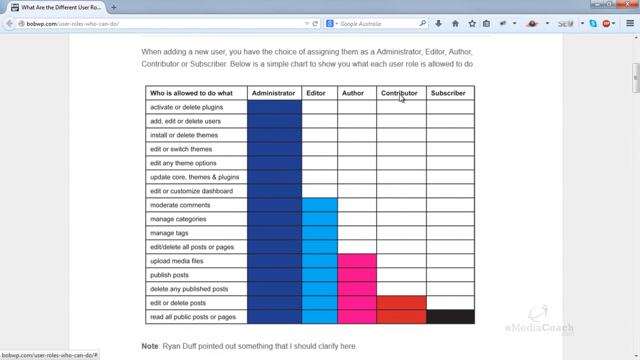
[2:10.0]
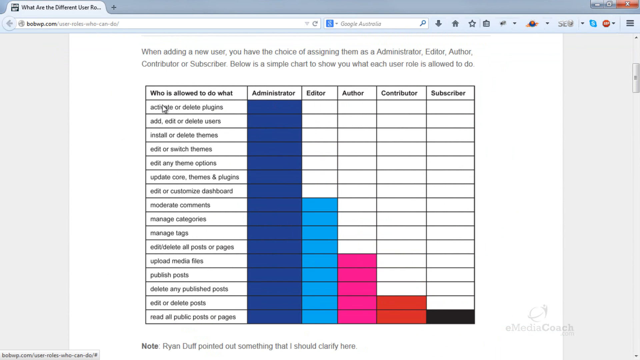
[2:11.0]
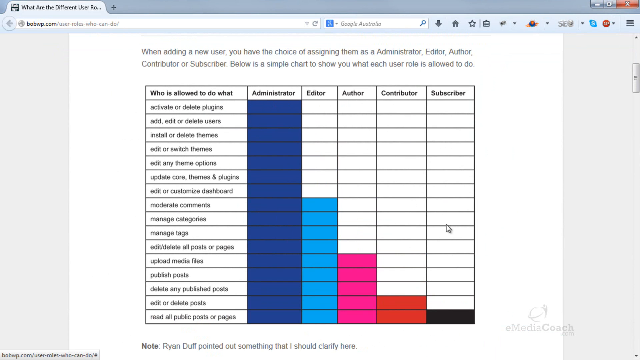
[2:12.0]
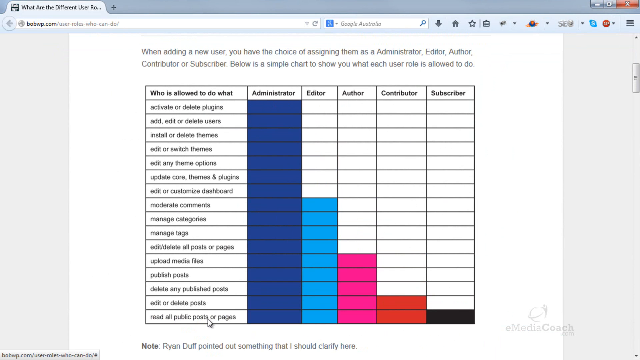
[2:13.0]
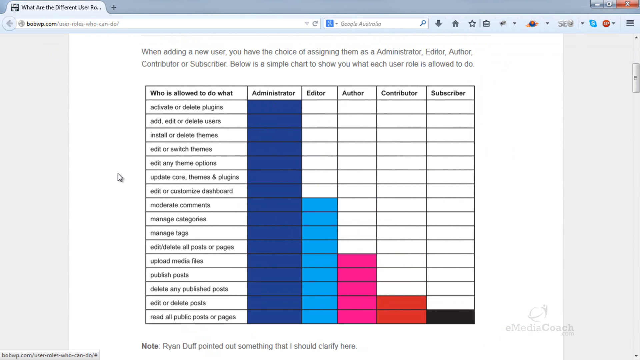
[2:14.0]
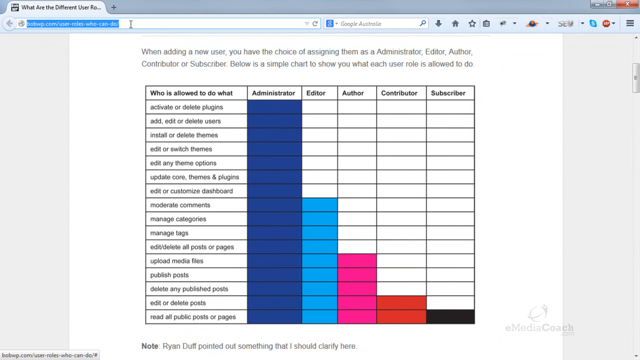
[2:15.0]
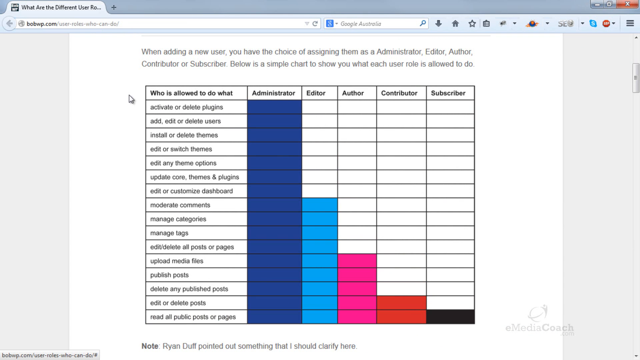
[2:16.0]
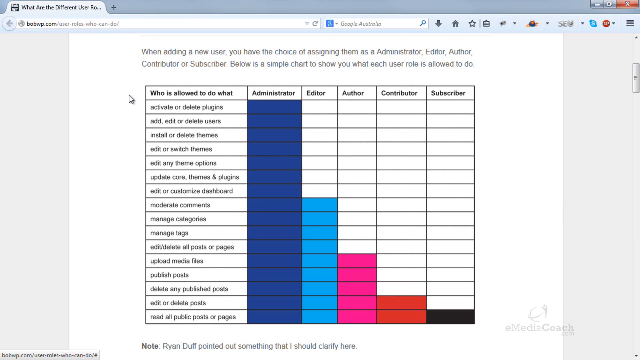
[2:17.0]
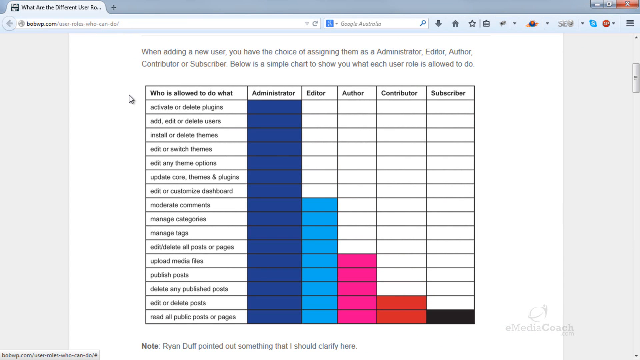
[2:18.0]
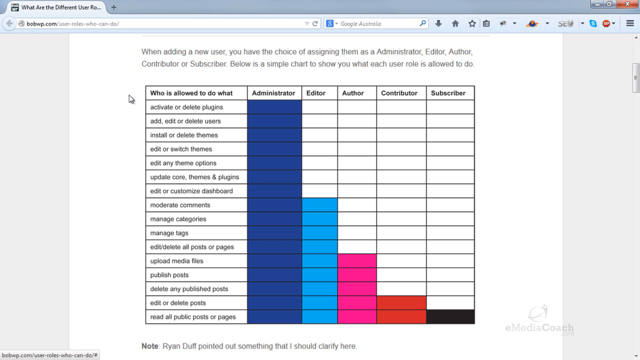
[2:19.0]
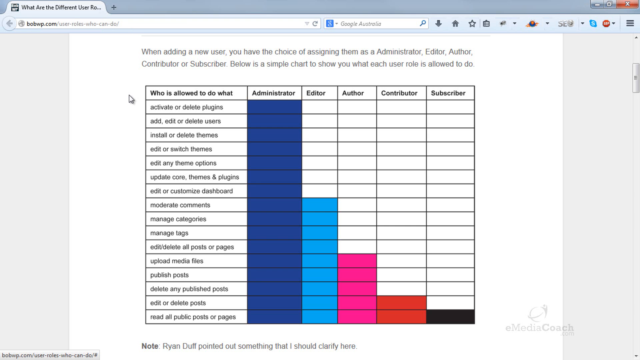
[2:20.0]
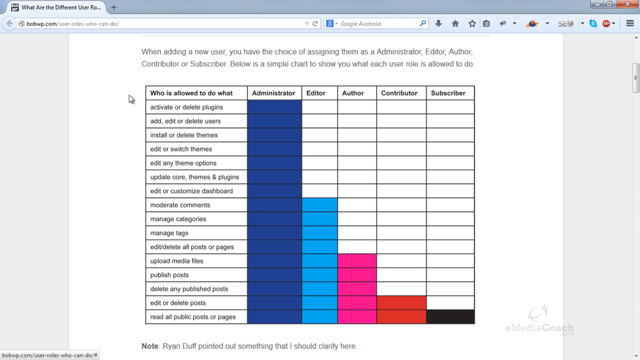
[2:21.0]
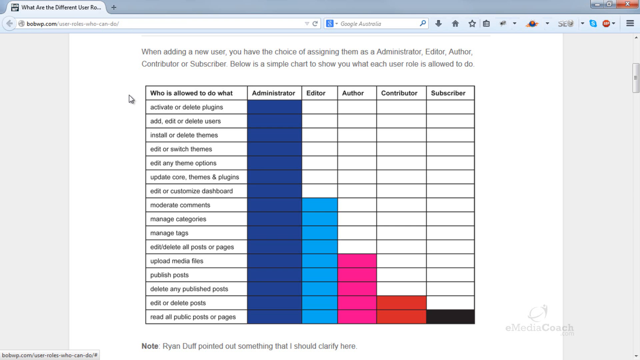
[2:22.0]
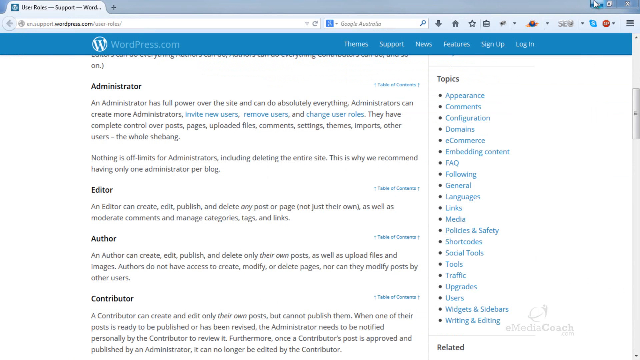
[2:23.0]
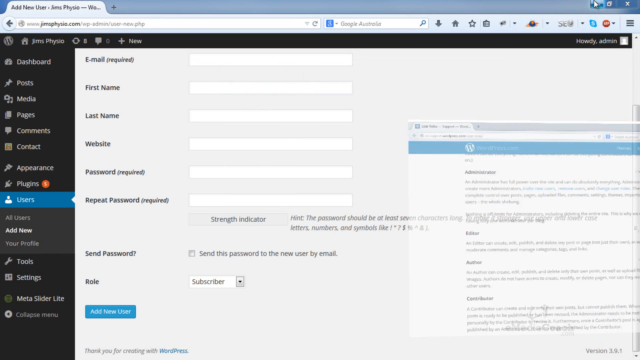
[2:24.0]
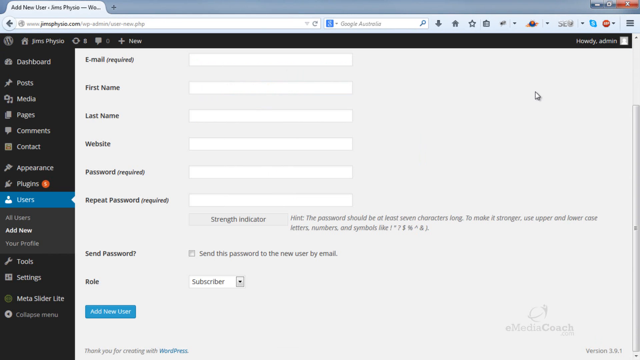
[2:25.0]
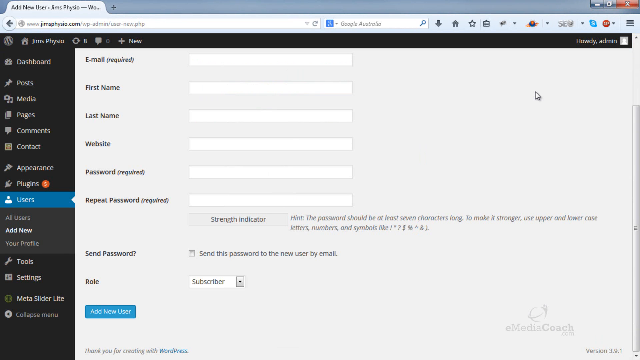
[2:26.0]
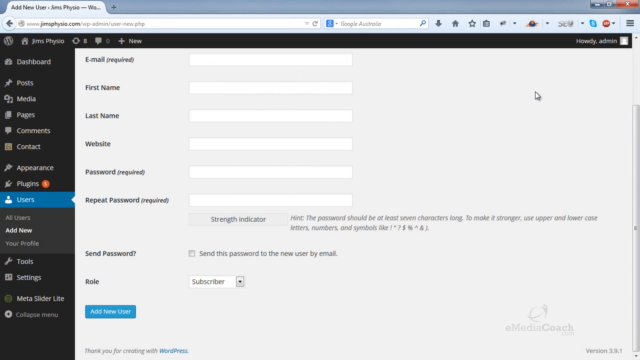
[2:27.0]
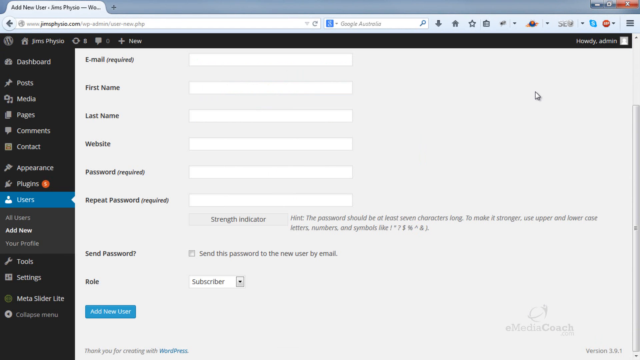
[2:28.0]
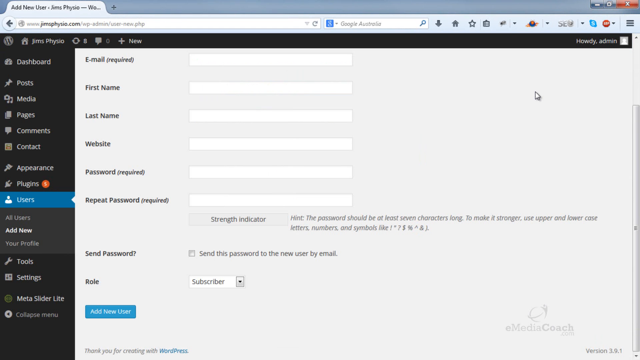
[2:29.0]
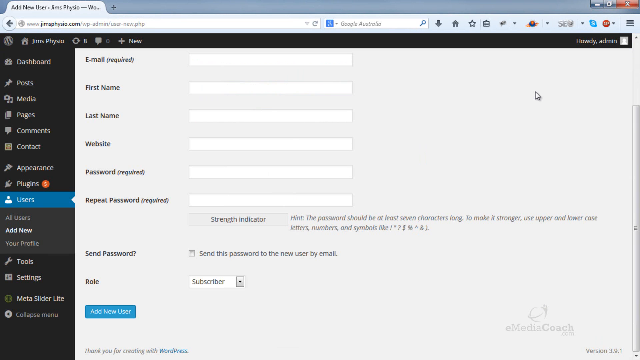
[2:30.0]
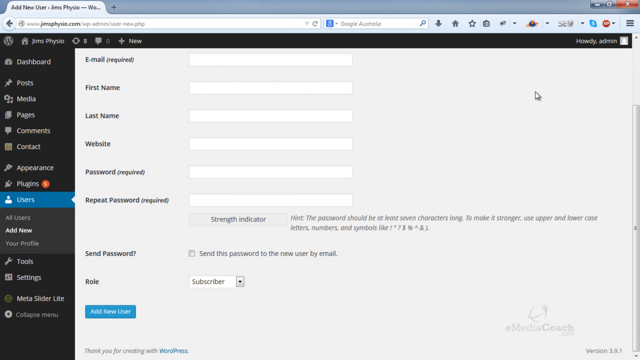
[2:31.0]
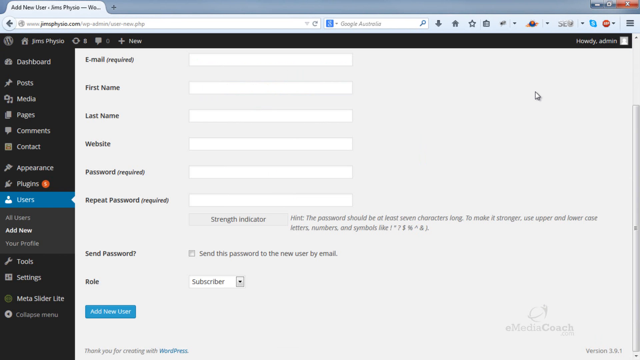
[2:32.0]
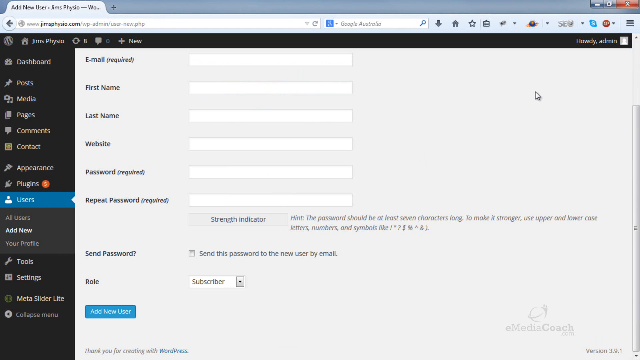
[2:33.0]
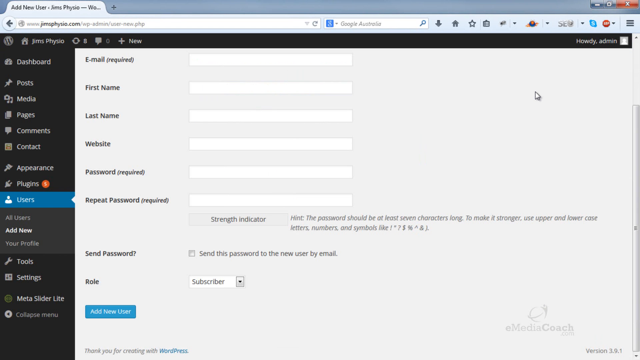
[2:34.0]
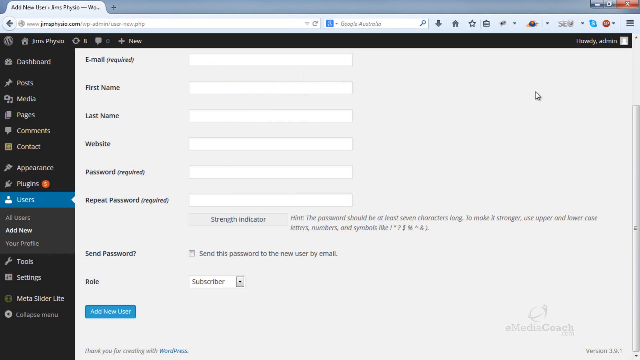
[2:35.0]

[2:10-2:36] The chart continues. The text above it reads: "When adding a new user, you have the choice of assigning them as administrator, editor, author, contributor, or subscriber. Below is a simple chart to show you what each user role is allowed to do." The heading at the top, in bold, says "who's allowed to do what", and the bold column names read "administrator, editor, author, contributor, subscriber". The lowest level, in black, says "read all public posts or pages". Next to it is contributor, in red, which adds "edit or delete posts". Author, in pink, has a few more: "upload files, publish posts, delete any published posts". Editor, in light blue, adds "edit/delete all posts or pages, manage tags, manage categories, moderate comments". The editor has everything, including "edit or customize dashboard, update core themes, plugins, edit any theme options, edit or switch themes, install or delete themes, add, edit or delete users, activate or delete plugins". The mouse moves back and forth. There are a lot of tabs open in the browser, and the person goes out of the chart; the mouse is on the left side of the column. They return to the WordPress users page, which asks for an email address, first name, last name, website and more.